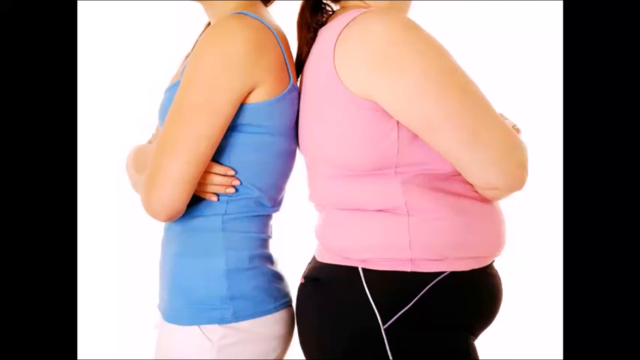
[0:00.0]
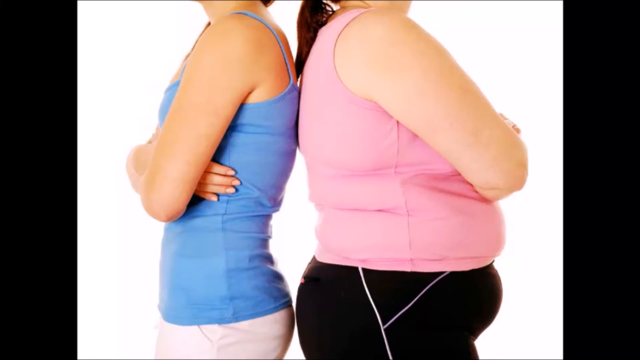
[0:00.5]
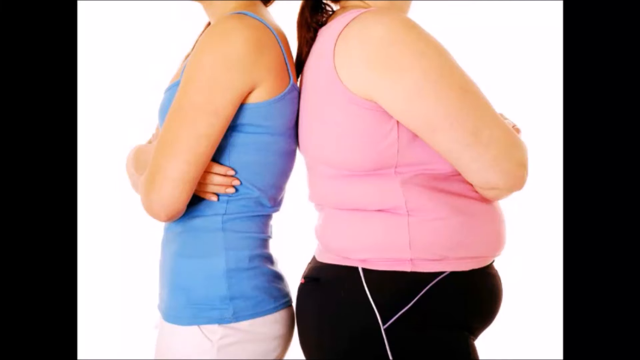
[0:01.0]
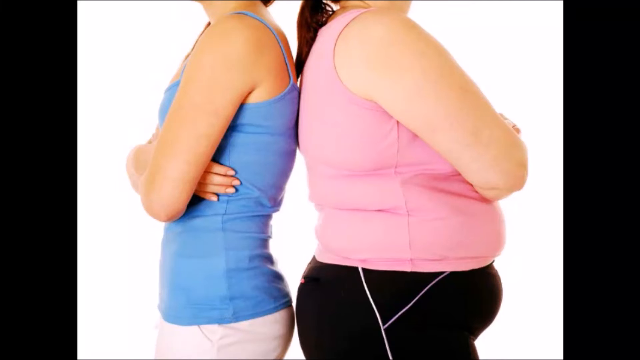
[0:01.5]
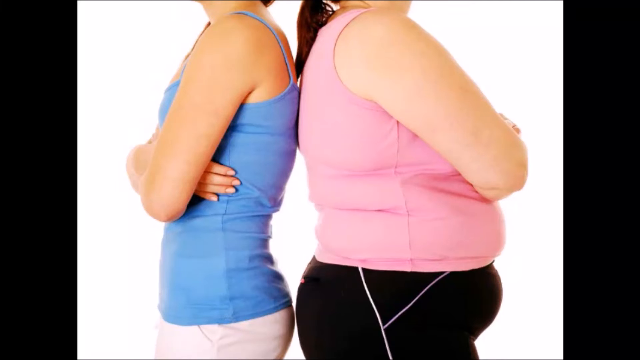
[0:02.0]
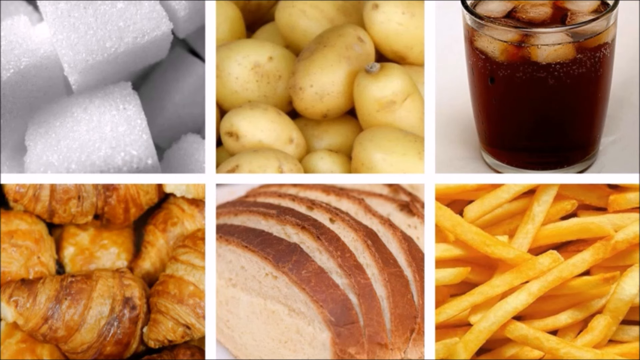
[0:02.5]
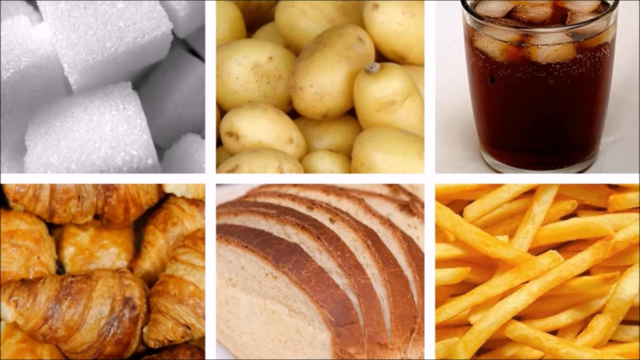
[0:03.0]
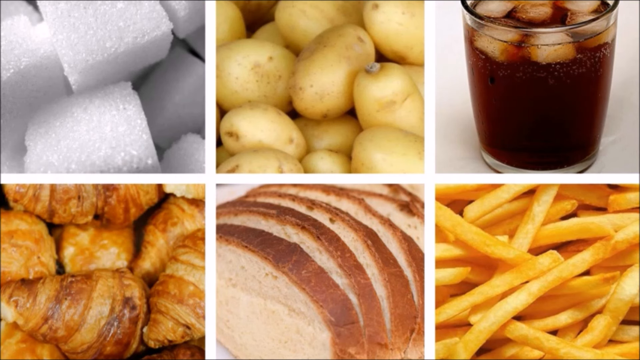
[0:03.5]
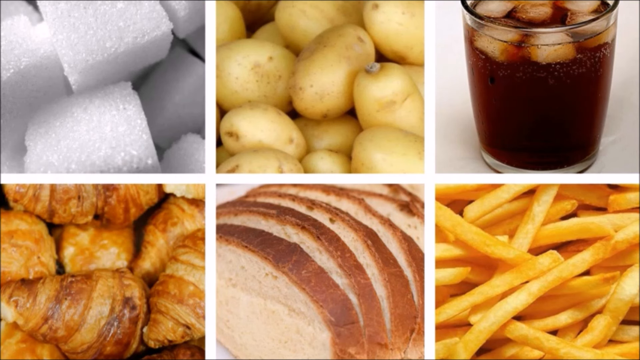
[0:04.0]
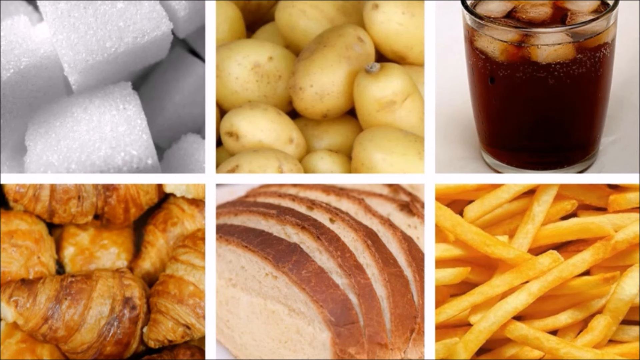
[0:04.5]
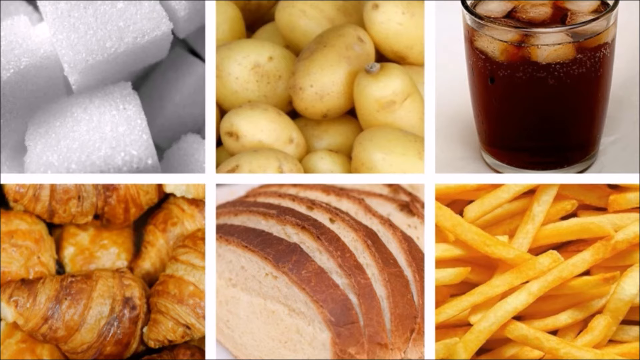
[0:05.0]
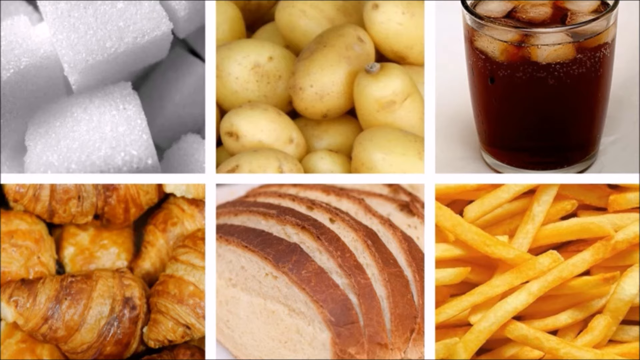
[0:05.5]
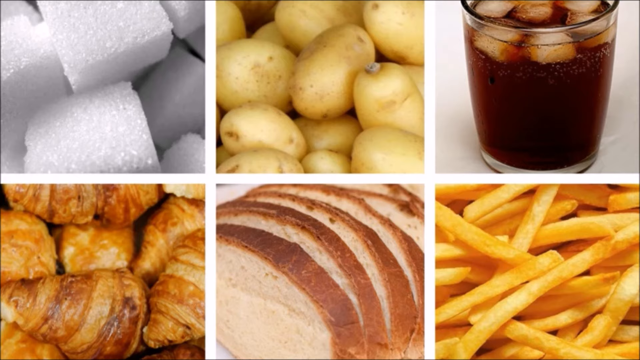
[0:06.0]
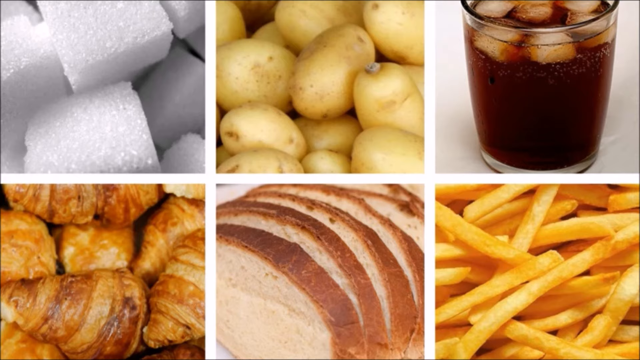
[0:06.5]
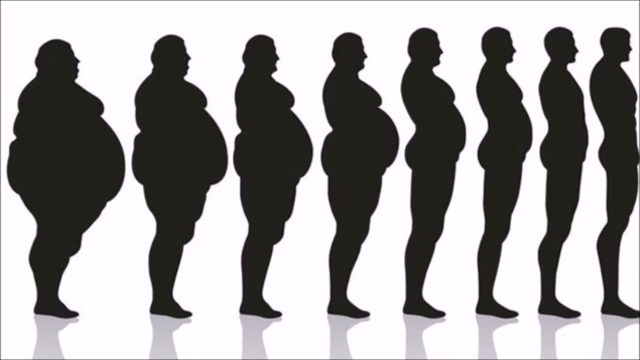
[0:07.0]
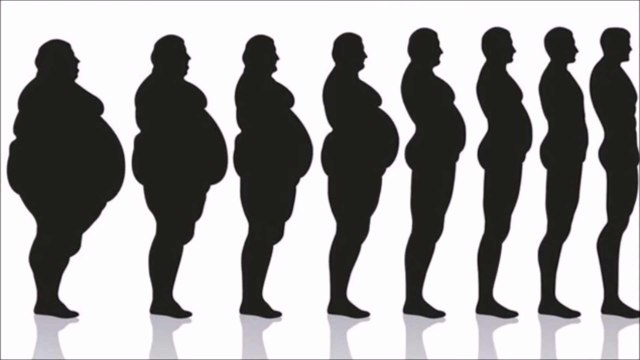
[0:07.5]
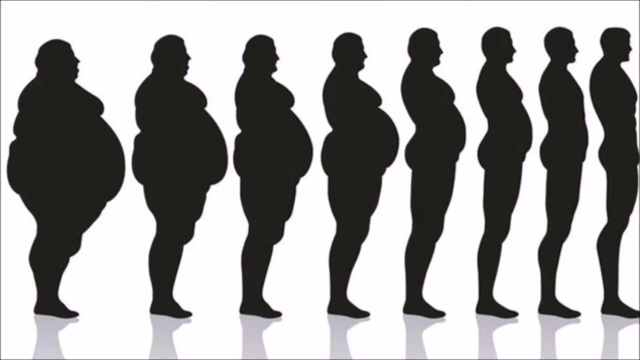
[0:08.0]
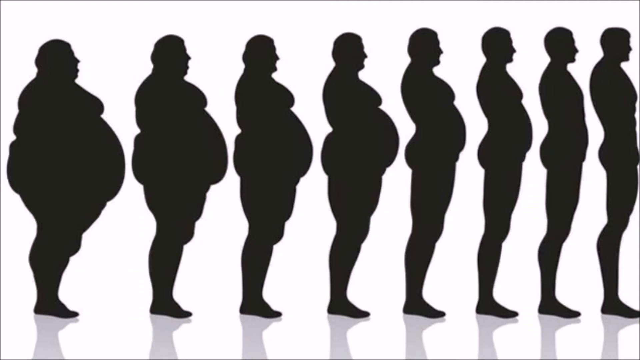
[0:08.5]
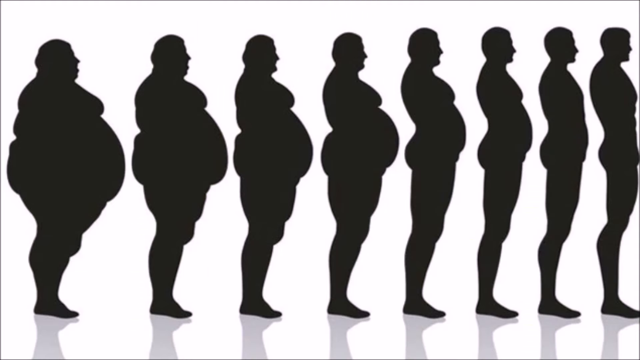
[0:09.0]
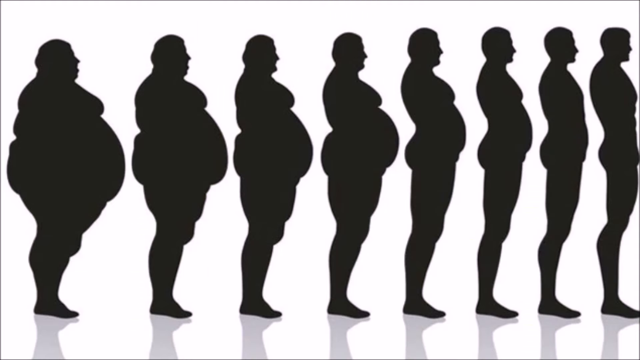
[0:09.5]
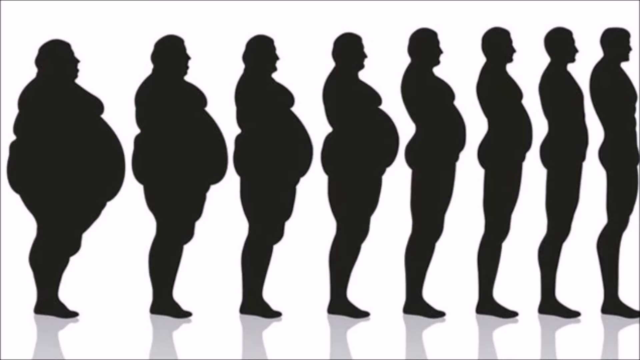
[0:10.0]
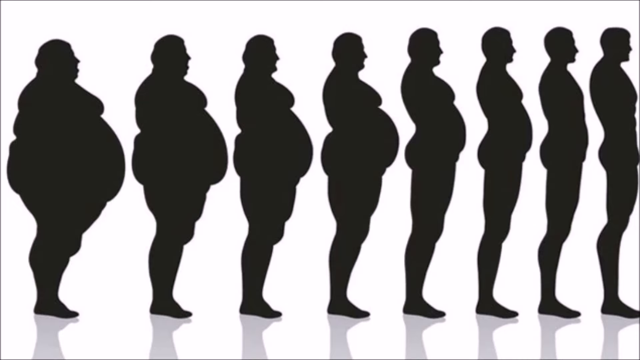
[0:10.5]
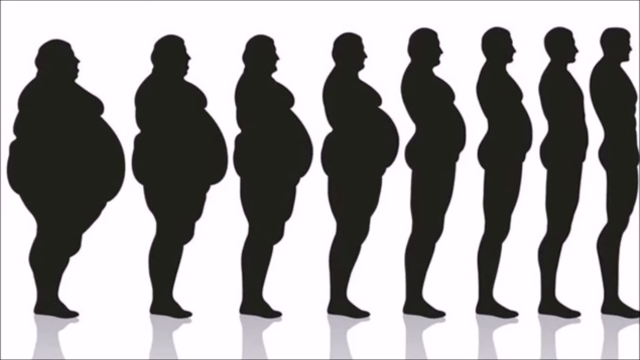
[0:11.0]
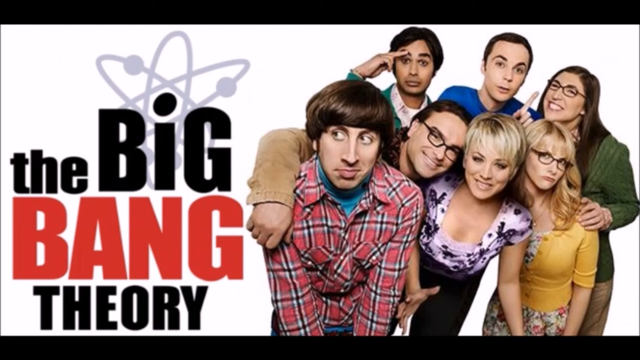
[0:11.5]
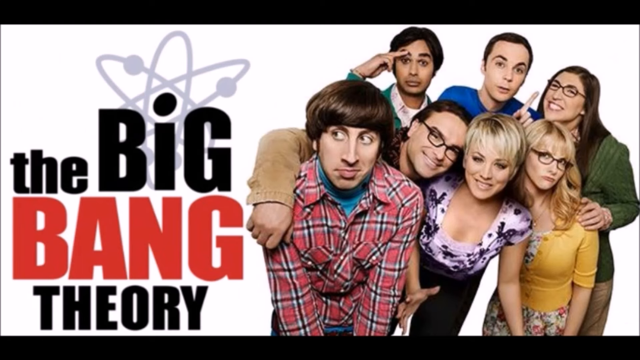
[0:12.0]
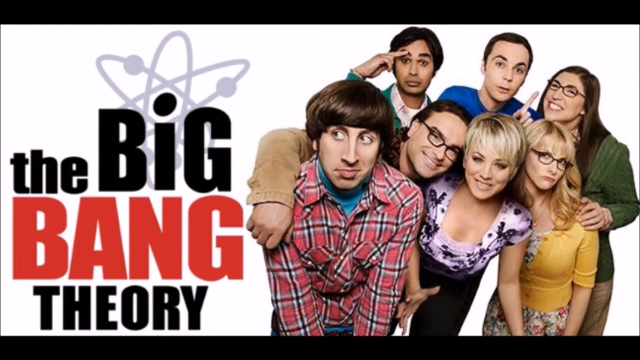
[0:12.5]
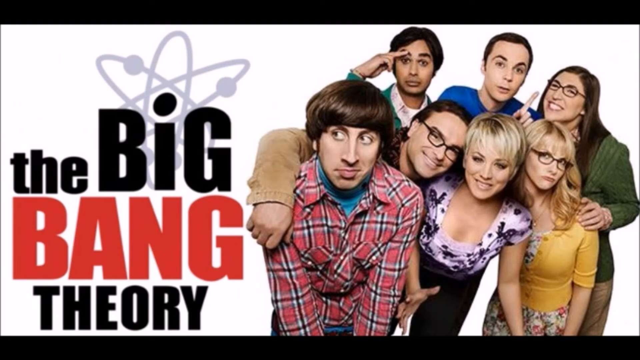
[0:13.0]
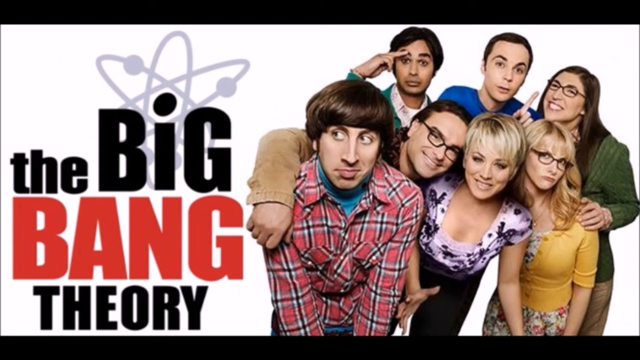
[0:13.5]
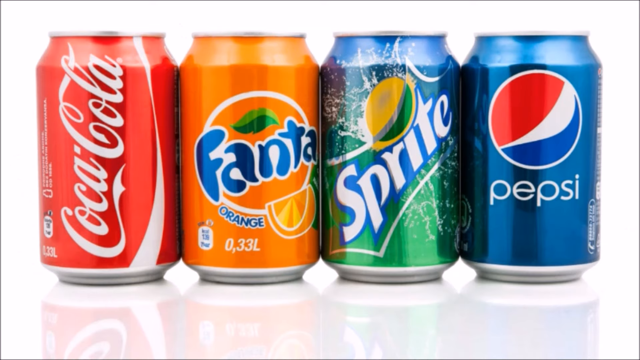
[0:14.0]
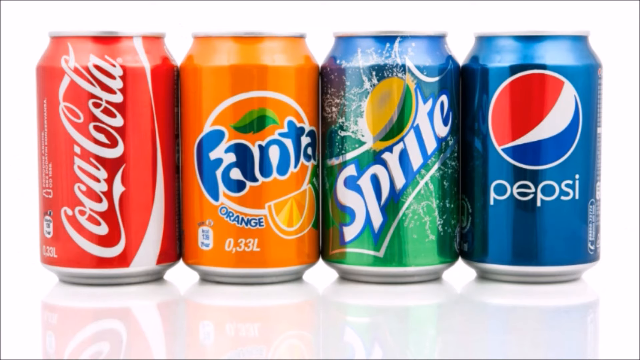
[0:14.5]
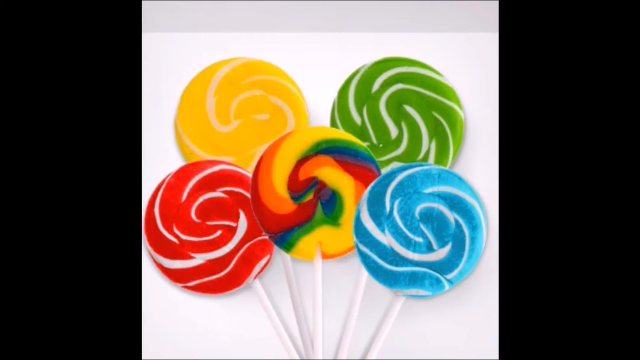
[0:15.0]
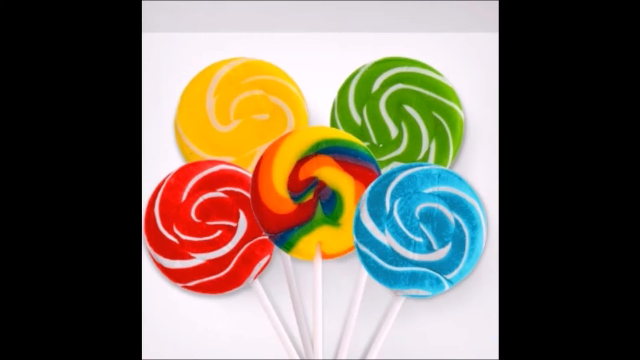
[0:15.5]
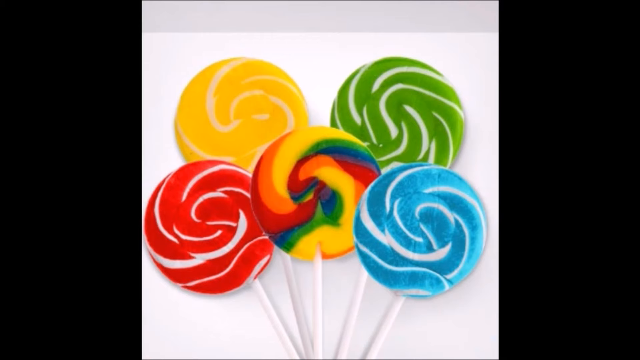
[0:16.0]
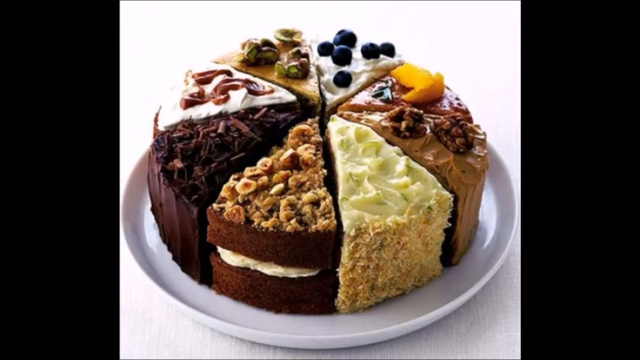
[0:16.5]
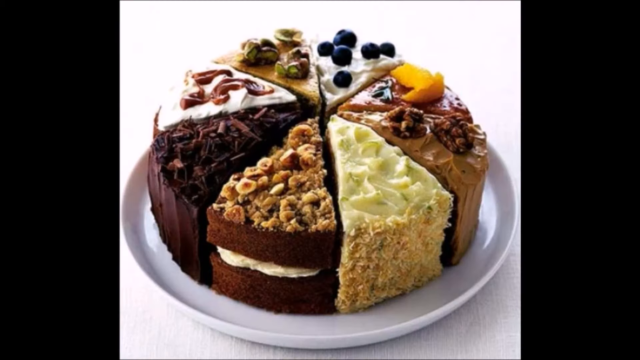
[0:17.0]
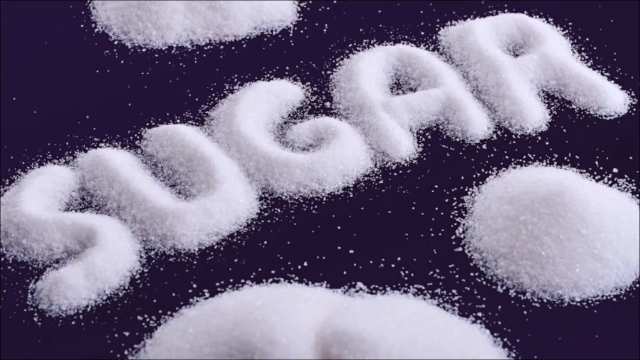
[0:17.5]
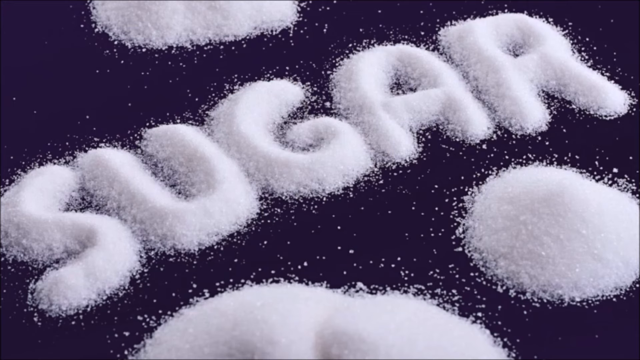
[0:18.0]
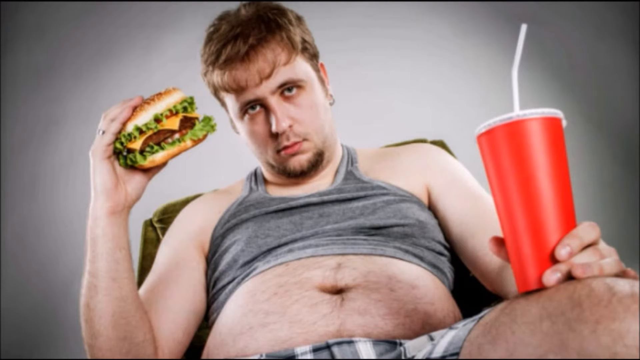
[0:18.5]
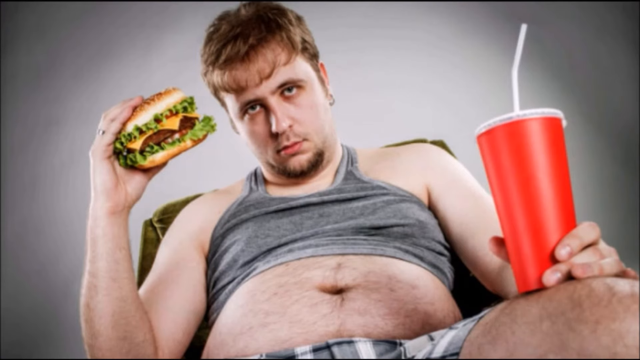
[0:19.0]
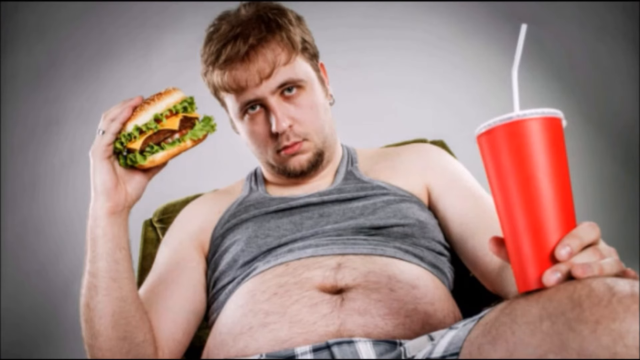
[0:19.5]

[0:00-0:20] Two women appear to be standing back-to-back, framed so they are cut off at the shoulders. One is very slim and fit and wears a blue spaghetti-strap top; the other is a little heavier, wears a pink top, and has some rolls in her upper abdomen and a roll in her lower abdomen. Both have their arms crossed. The scene switches to six pictures, three on the top and three on the bottom, divided by white lines; they appear to show sugar cubes, potatoes, soda, French fries, bread and some pastries. Next comes a progression of black silhouettes on a white background going from obesity to thinness: it starts with a very obese woman, then a little less obese, then sort of obese, then kind of fat, then a little thick with a little bit of a tummy, and finally a person who is more fit. Then an image of the Big Bang Theory and its whole cast appears, followed by a picture of four cans of soda, five lollipops, some cake, and the word "sugar" spelled out in sugar.